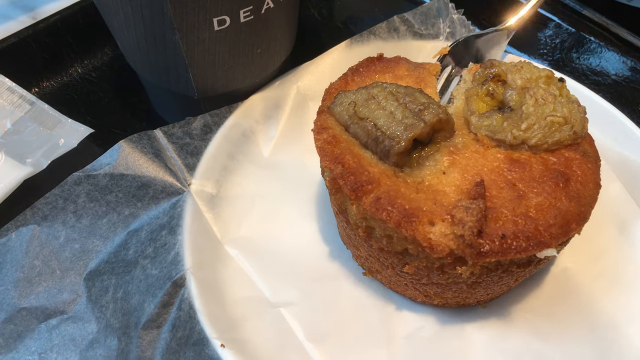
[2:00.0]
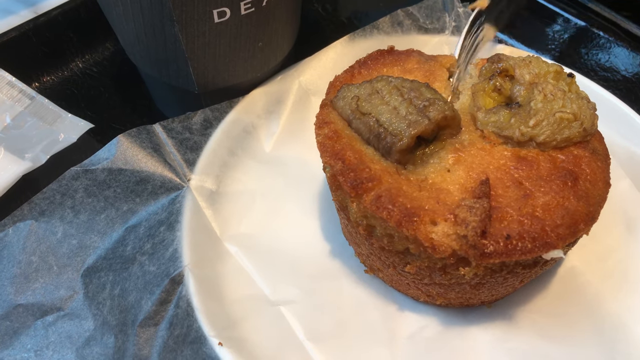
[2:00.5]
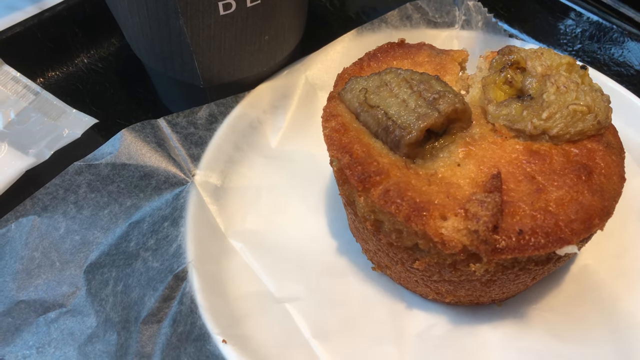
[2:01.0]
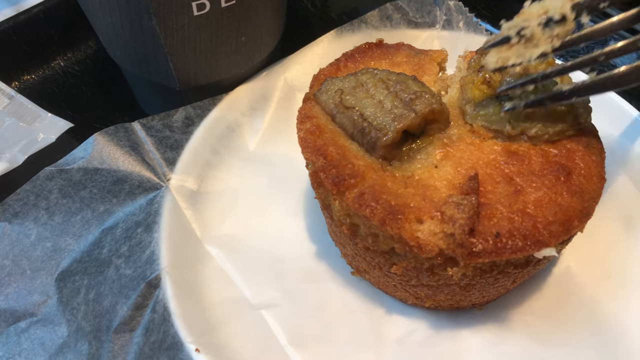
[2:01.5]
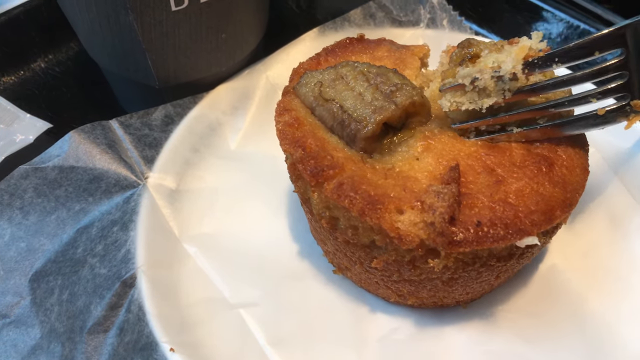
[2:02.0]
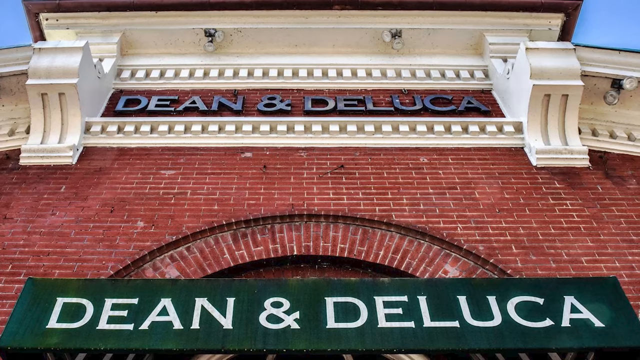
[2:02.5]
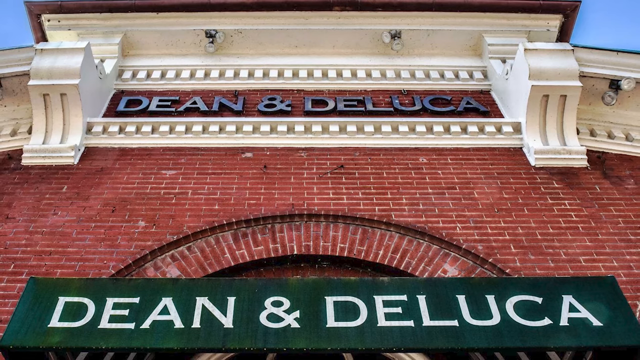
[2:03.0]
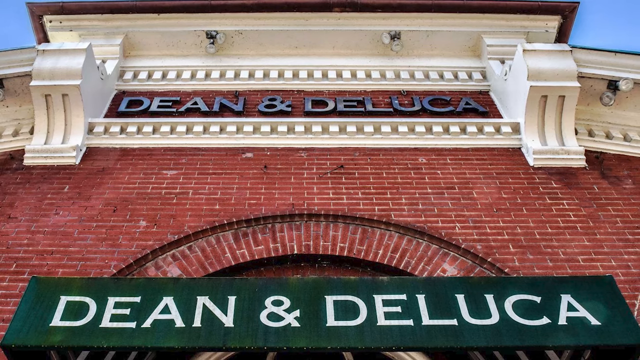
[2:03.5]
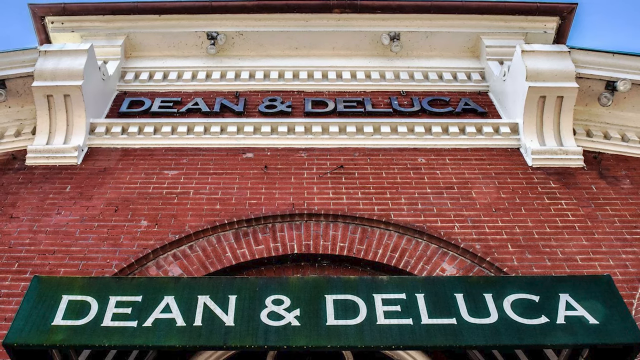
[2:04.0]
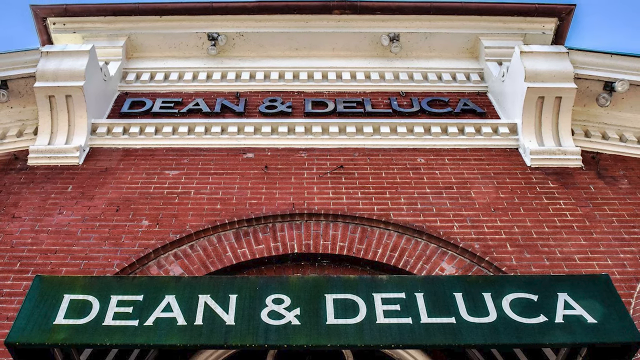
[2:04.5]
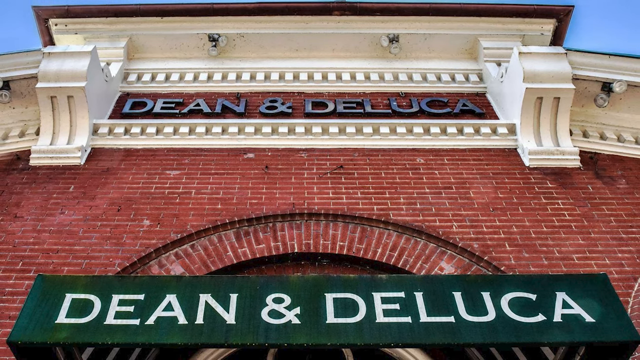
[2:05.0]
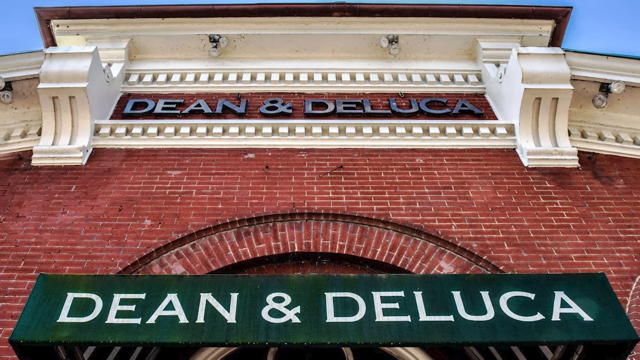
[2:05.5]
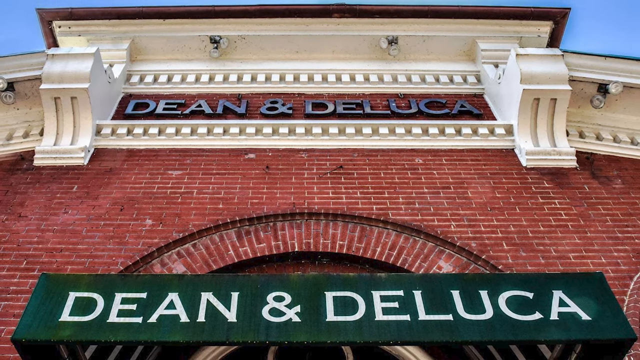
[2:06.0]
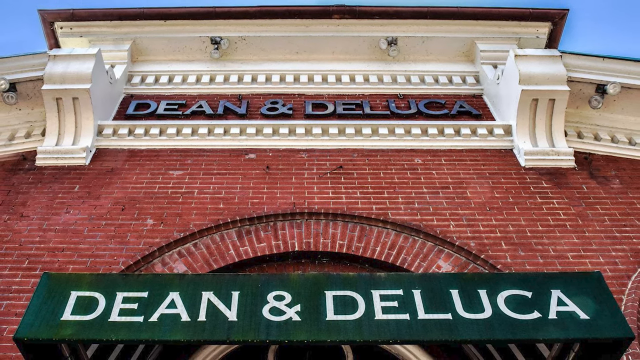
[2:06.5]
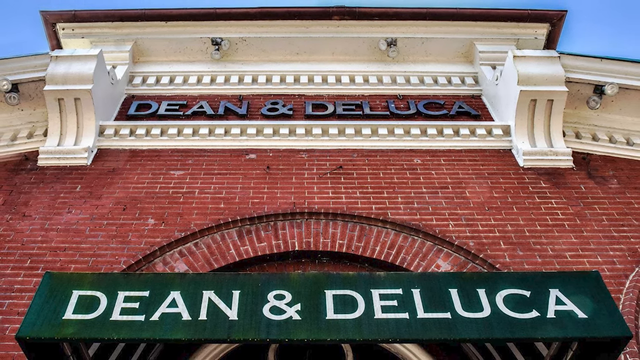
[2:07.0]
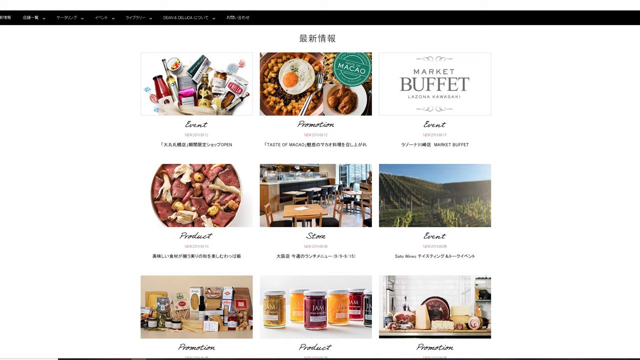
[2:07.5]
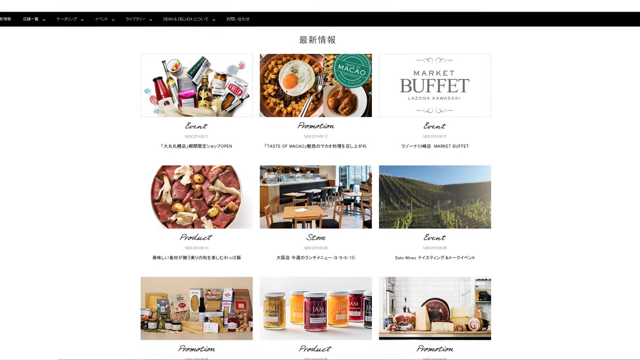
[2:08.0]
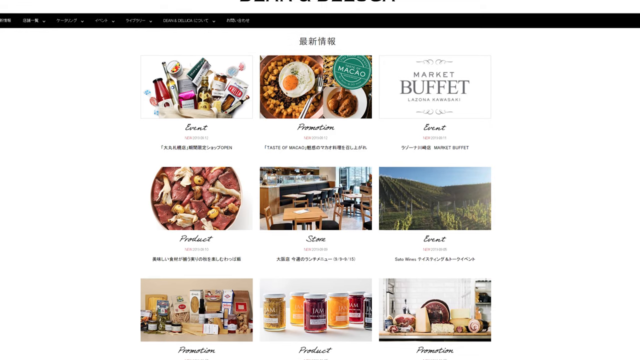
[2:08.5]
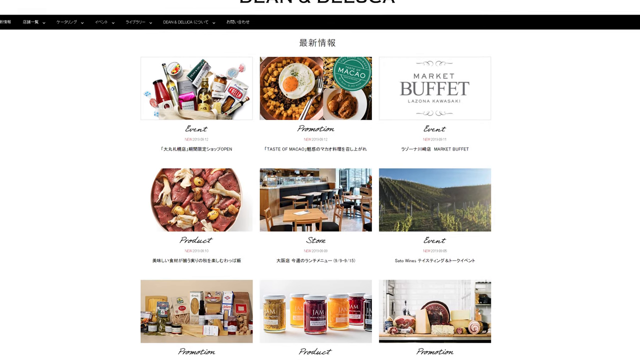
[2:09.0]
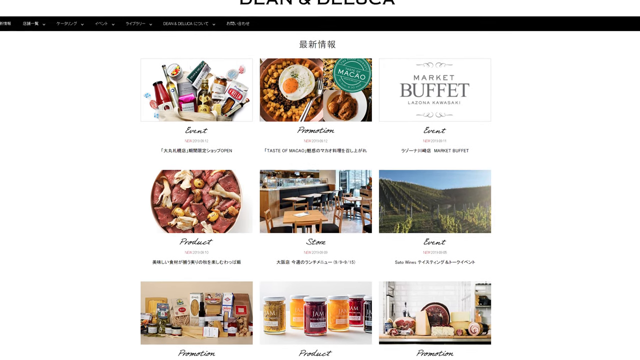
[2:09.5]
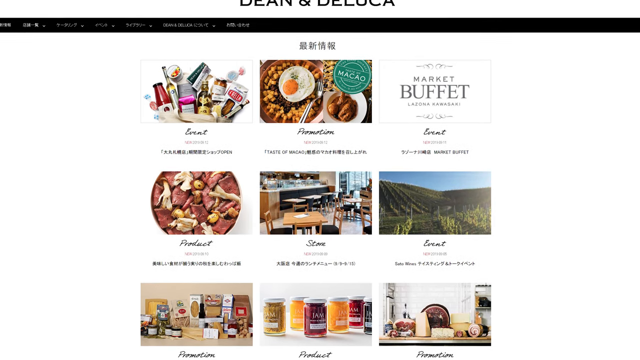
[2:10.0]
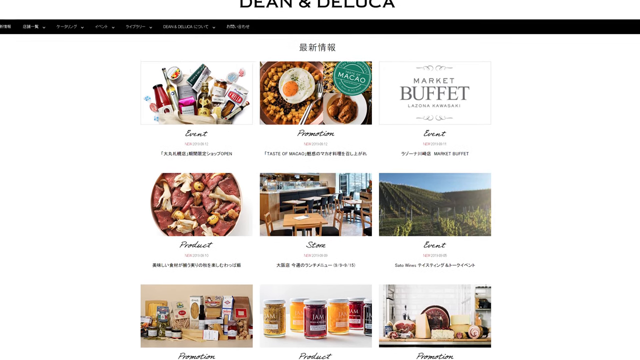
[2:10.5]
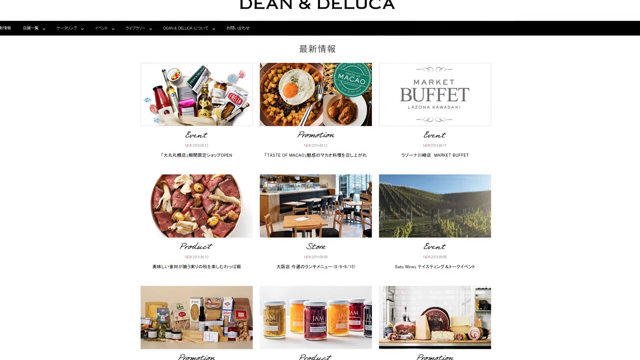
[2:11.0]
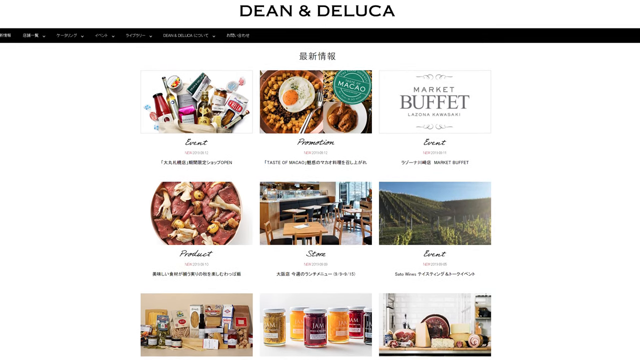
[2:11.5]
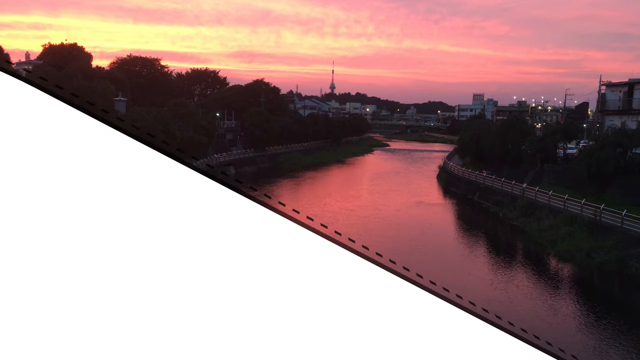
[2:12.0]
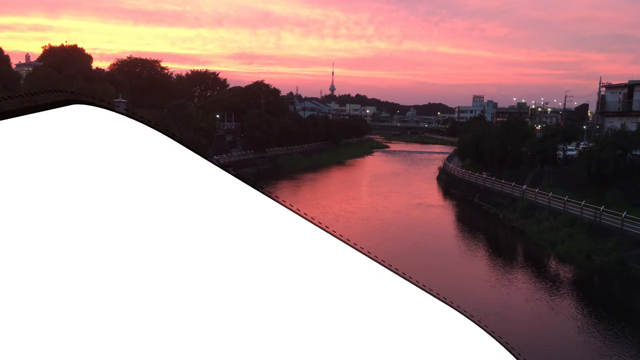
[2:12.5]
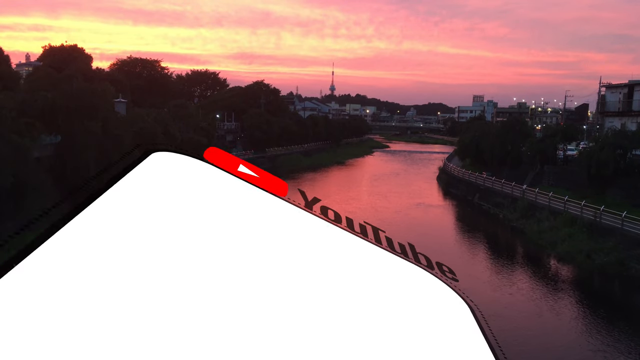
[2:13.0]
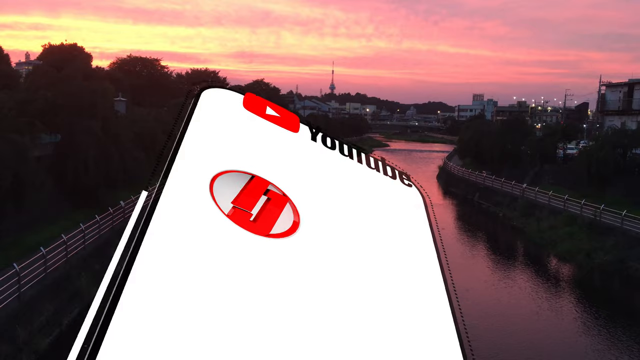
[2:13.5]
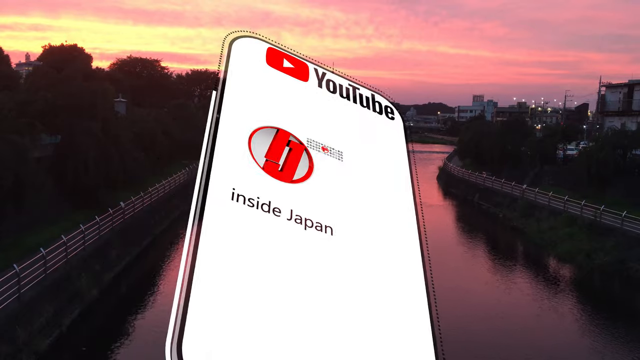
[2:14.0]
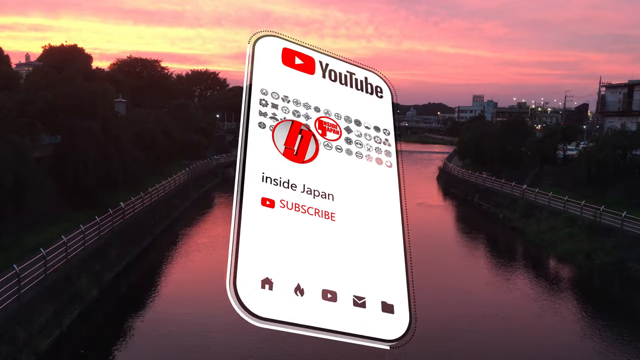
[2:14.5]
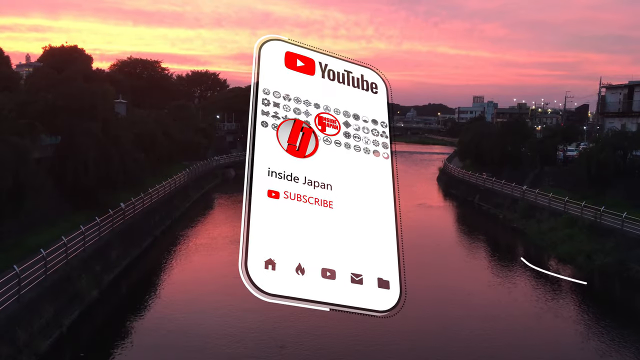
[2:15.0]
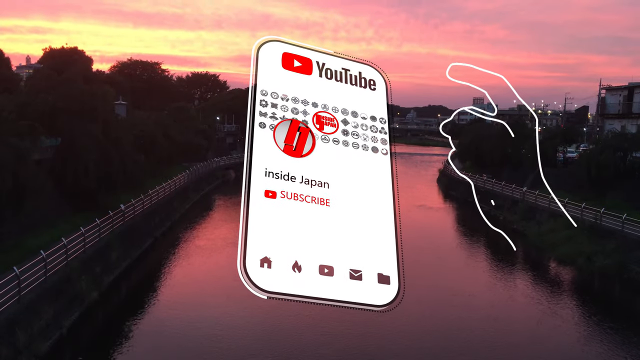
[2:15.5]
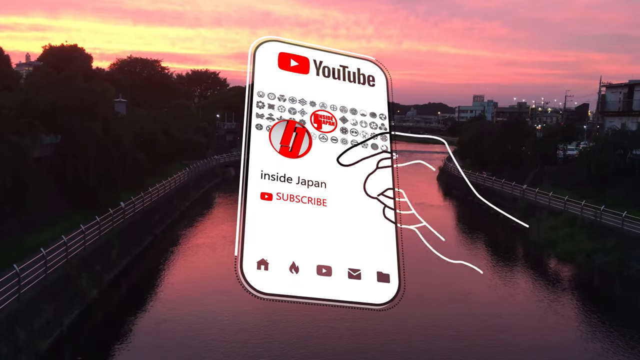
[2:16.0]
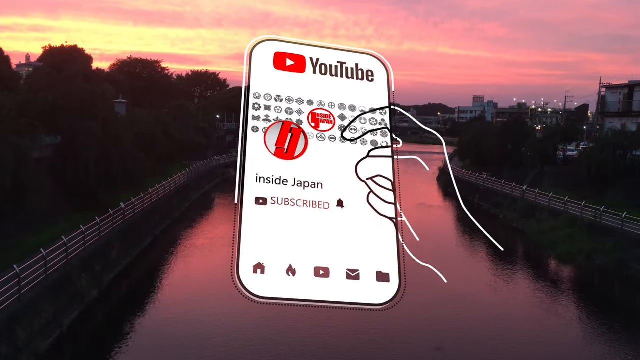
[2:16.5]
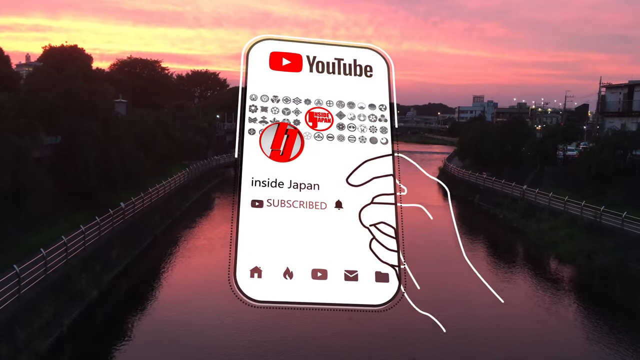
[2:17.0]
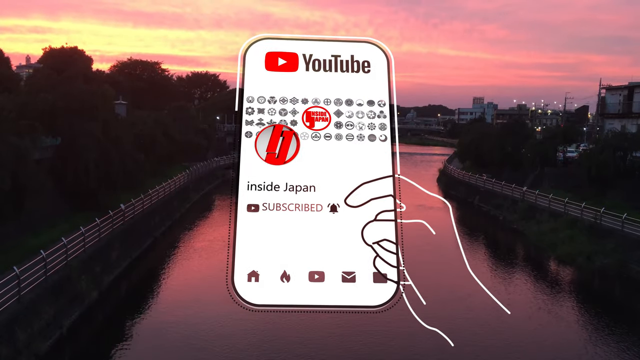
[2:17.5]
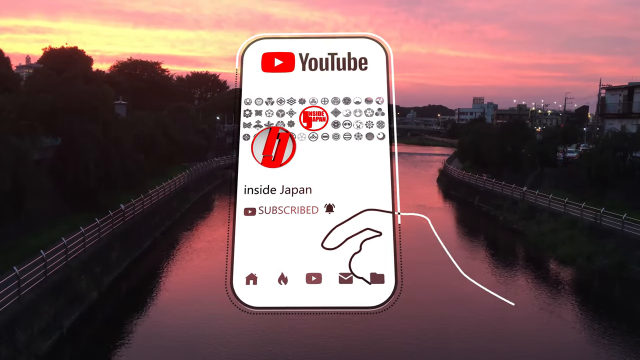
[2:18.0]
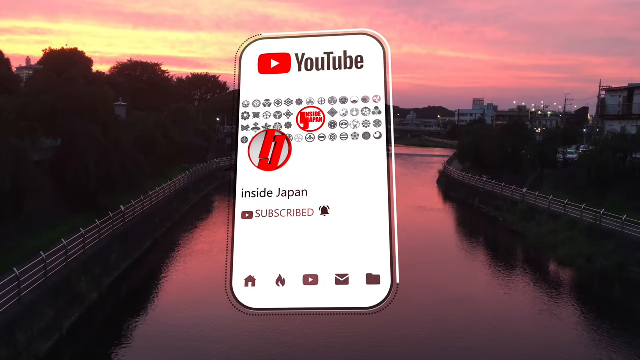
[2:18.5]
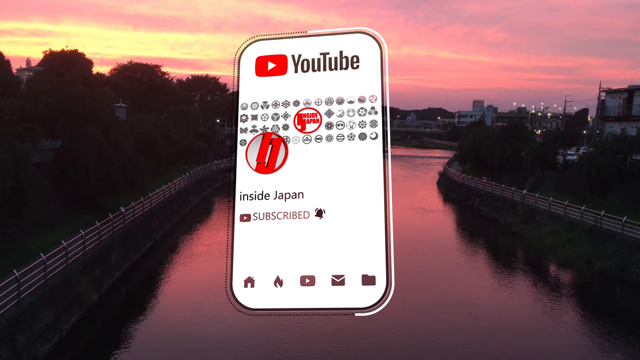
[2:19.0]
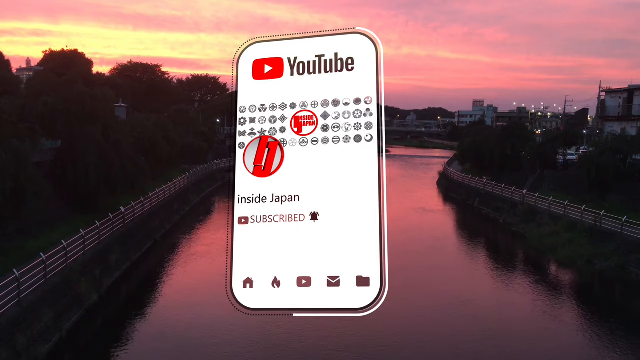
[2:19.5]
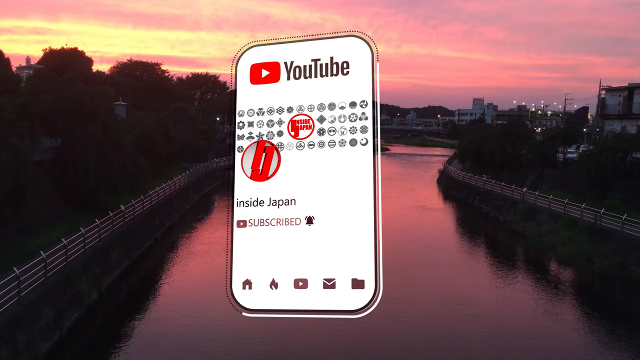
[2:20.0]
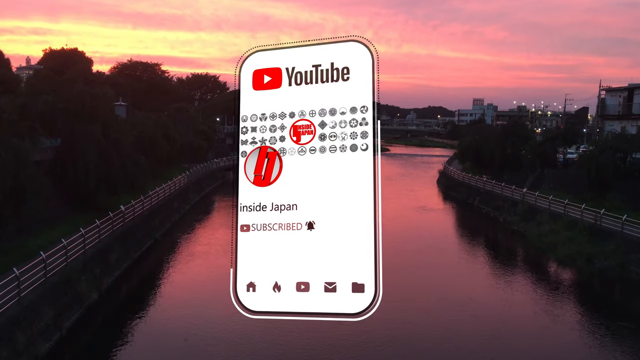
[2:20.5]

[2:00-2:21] Someone continues cutting into a baked muffin with a fork; it has two big pieces of sausage on top. A still photo of the outside of a Dean and DeLuca building pans out. The website is then displayed, on what looks to be a page showing off different services, possibly. An outro screen follows, showing a lake and a river in a town as an animated phone appears; on the phone screen is the Inside Japan YouTube channel, and an animation shows the subscribe button being clicked. The video ends on a view of a river with the sun setting in the background.